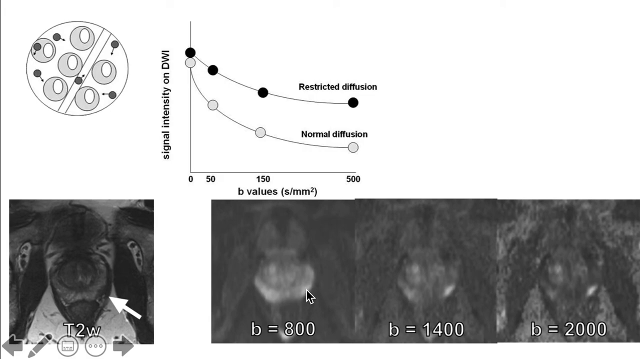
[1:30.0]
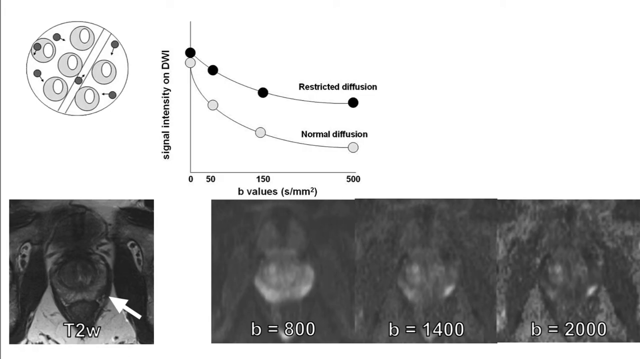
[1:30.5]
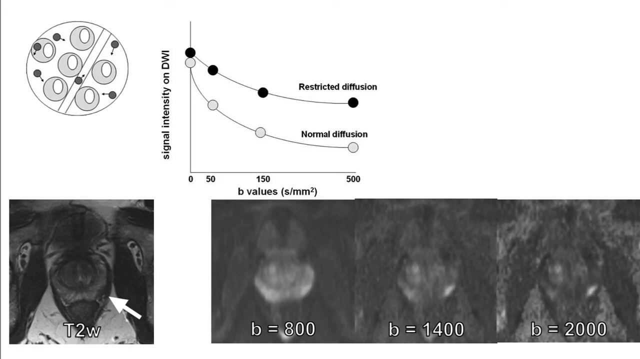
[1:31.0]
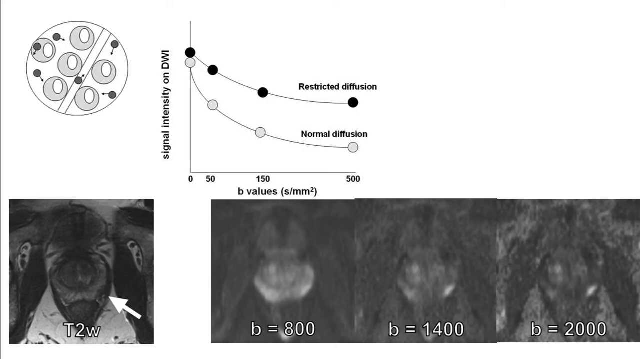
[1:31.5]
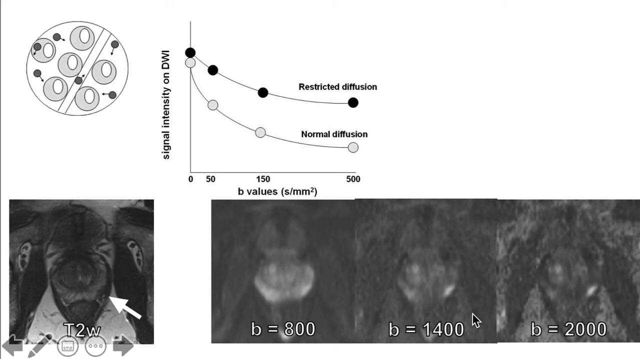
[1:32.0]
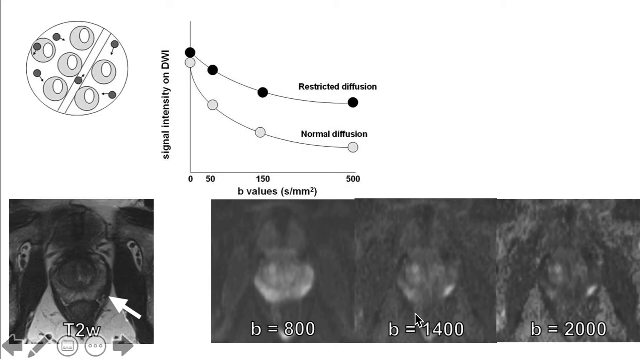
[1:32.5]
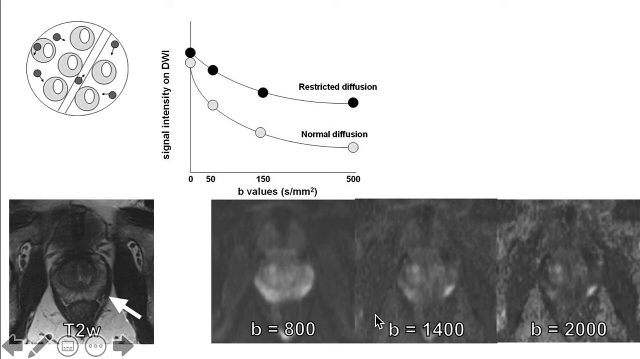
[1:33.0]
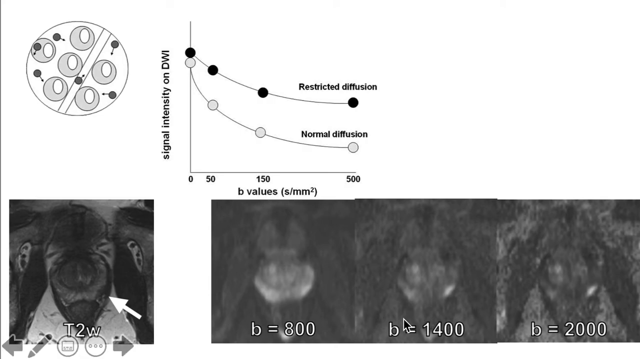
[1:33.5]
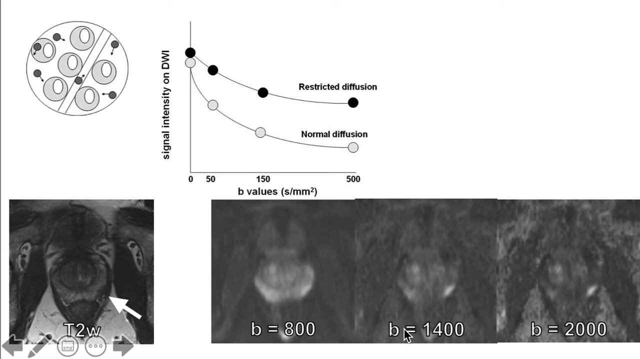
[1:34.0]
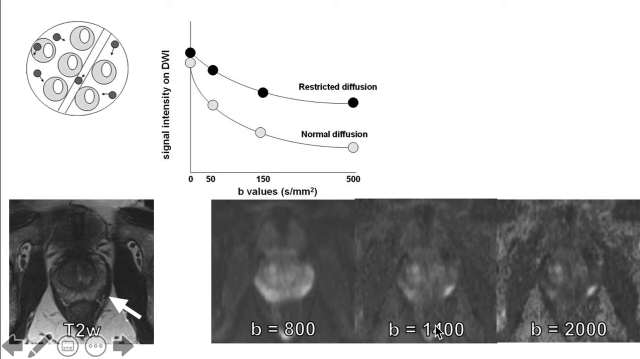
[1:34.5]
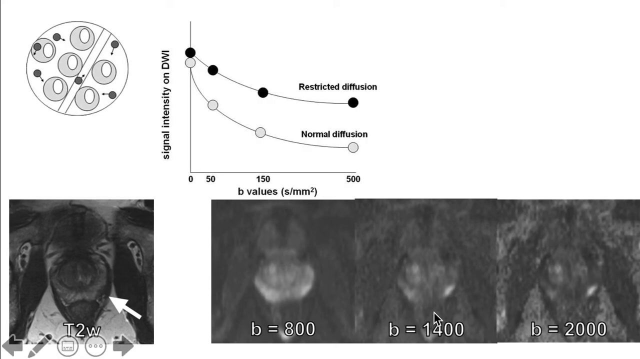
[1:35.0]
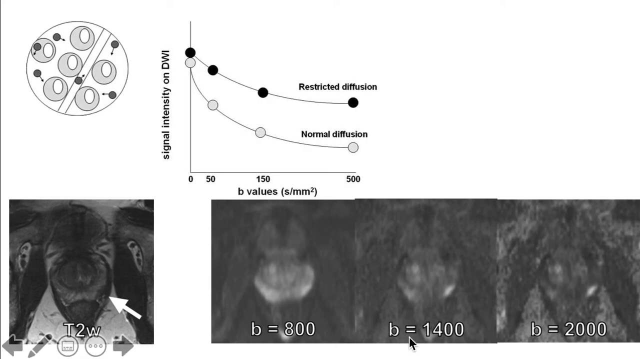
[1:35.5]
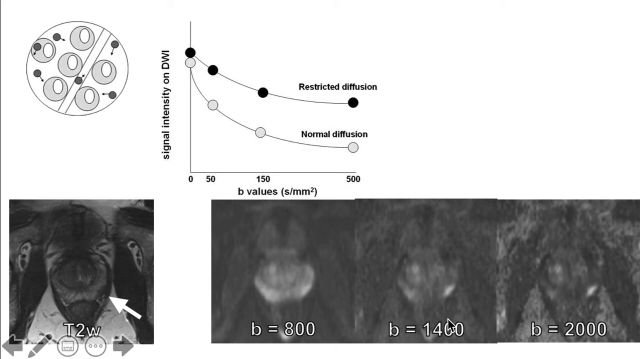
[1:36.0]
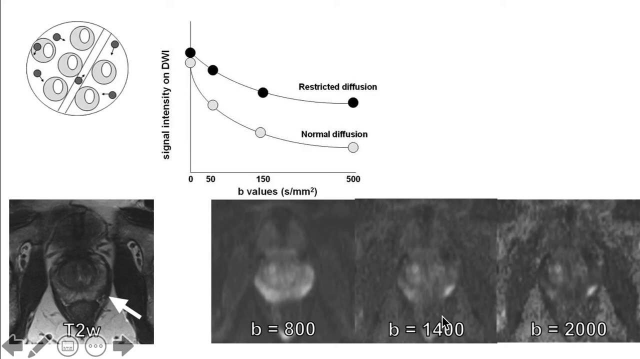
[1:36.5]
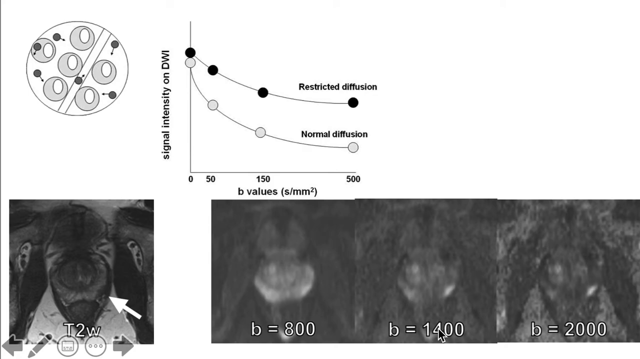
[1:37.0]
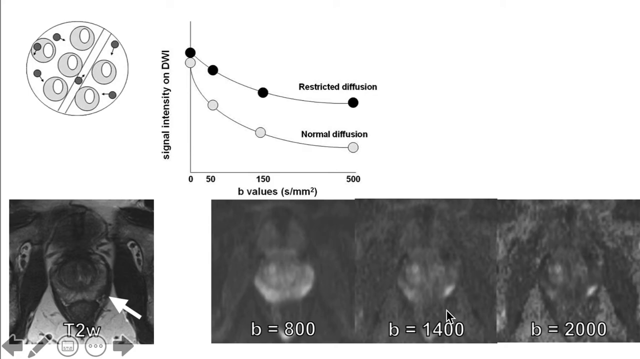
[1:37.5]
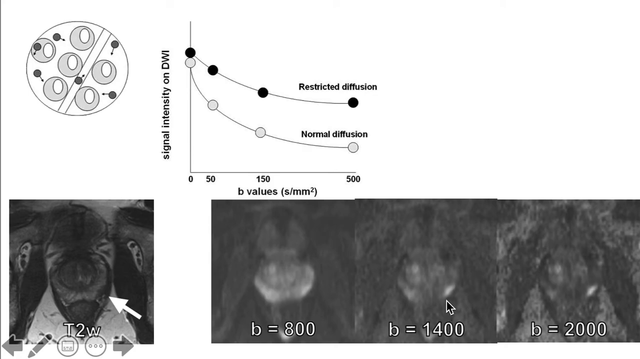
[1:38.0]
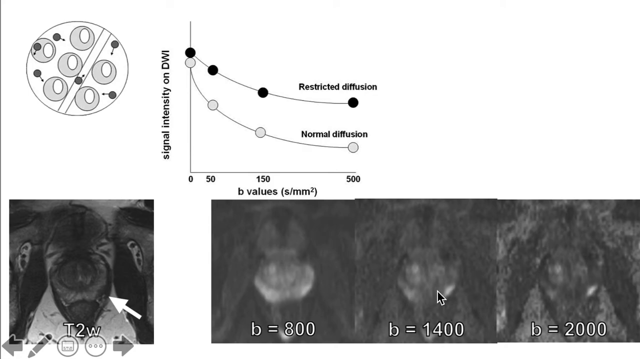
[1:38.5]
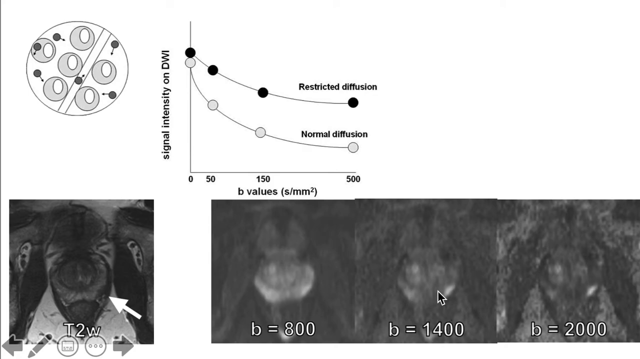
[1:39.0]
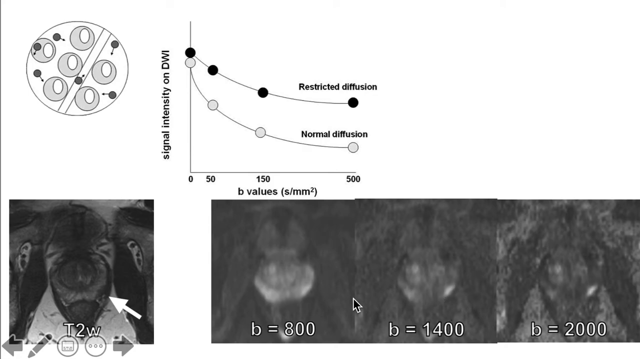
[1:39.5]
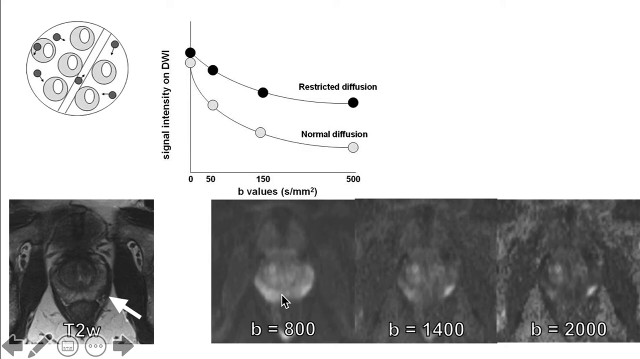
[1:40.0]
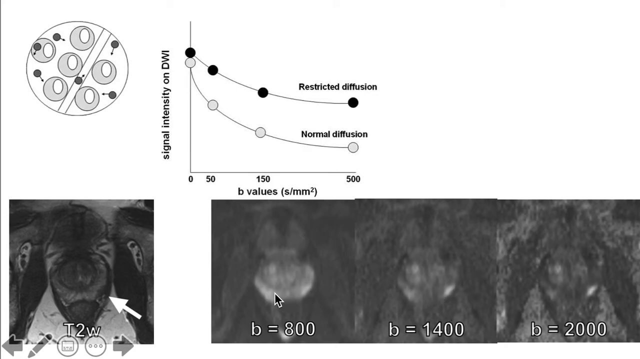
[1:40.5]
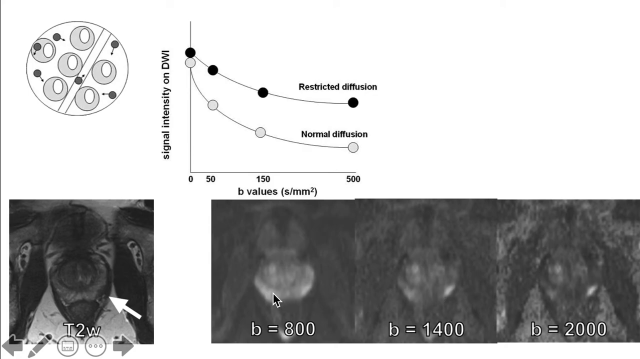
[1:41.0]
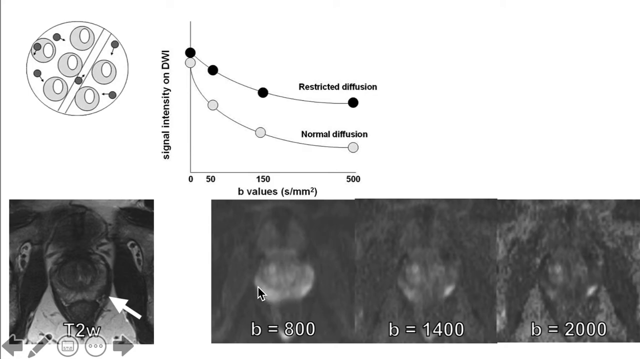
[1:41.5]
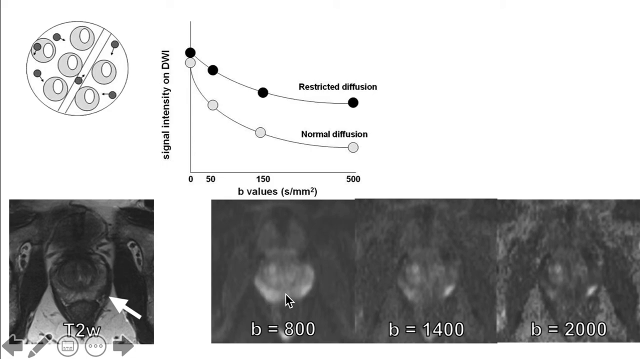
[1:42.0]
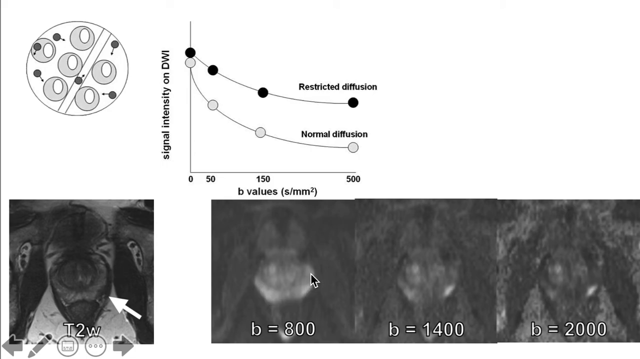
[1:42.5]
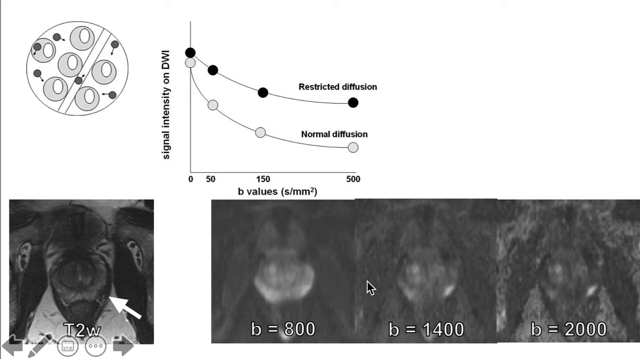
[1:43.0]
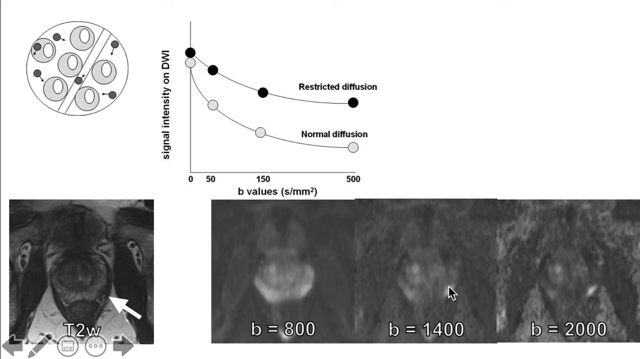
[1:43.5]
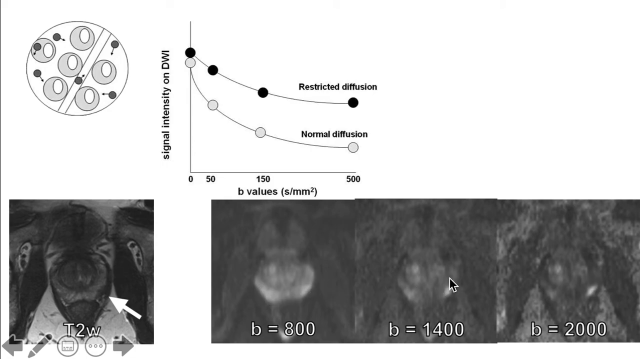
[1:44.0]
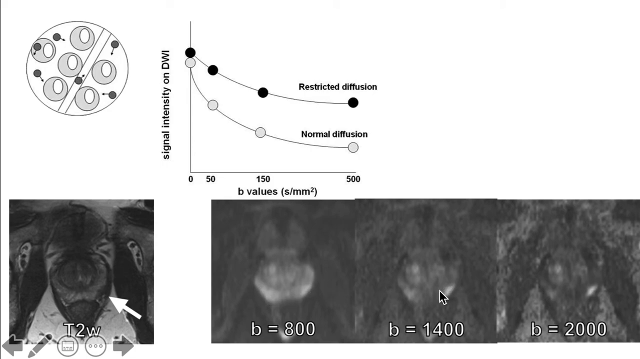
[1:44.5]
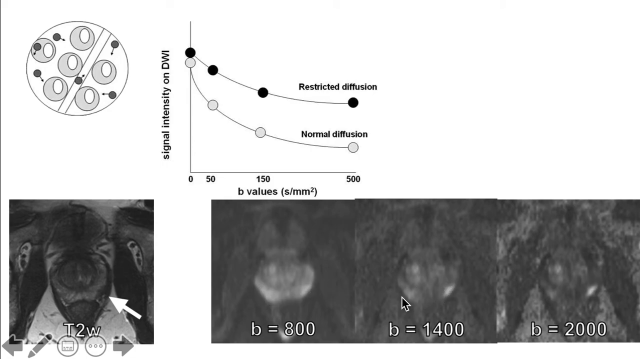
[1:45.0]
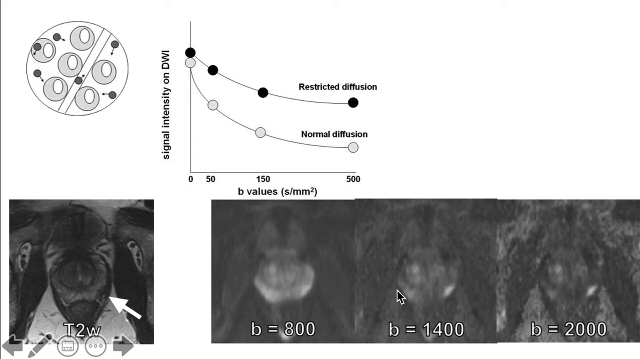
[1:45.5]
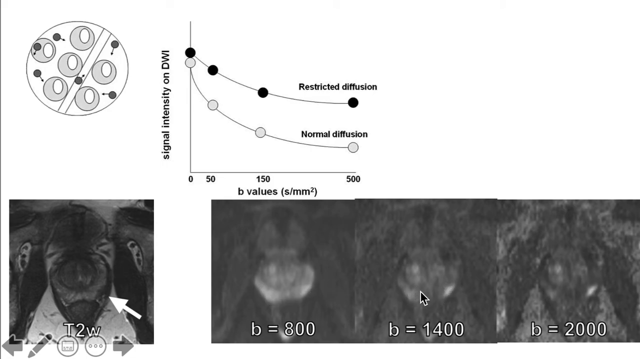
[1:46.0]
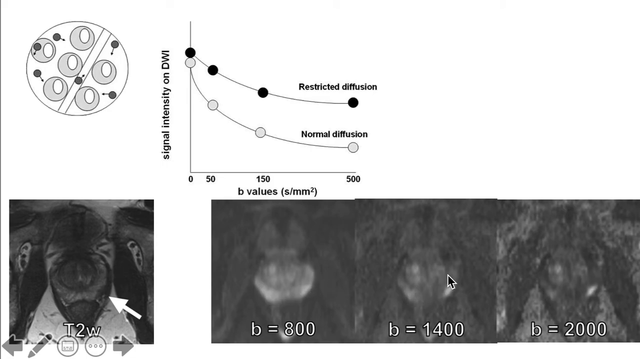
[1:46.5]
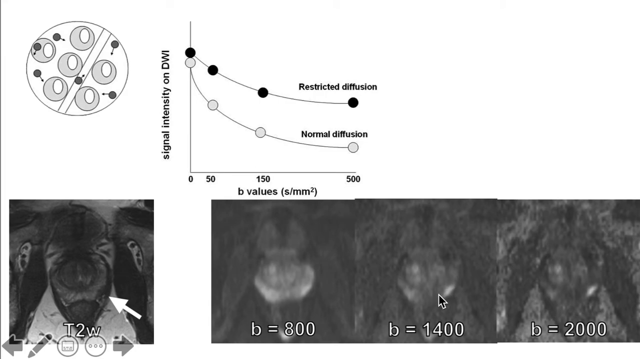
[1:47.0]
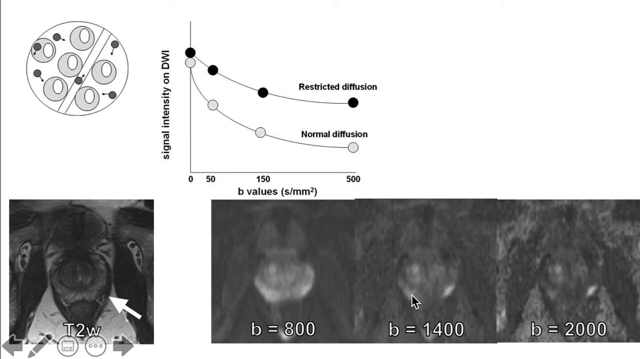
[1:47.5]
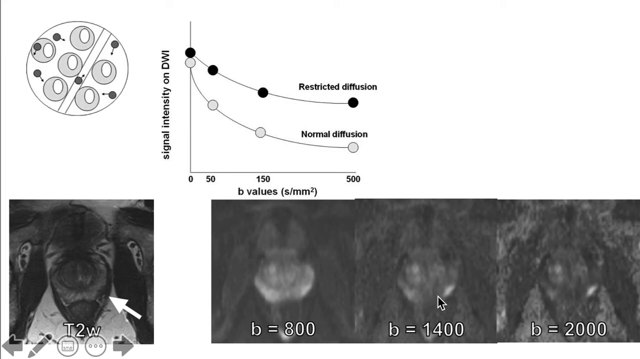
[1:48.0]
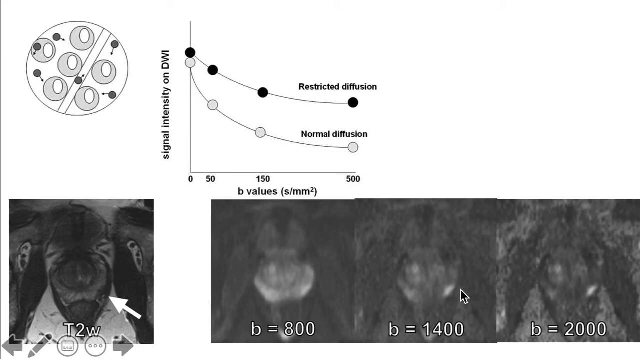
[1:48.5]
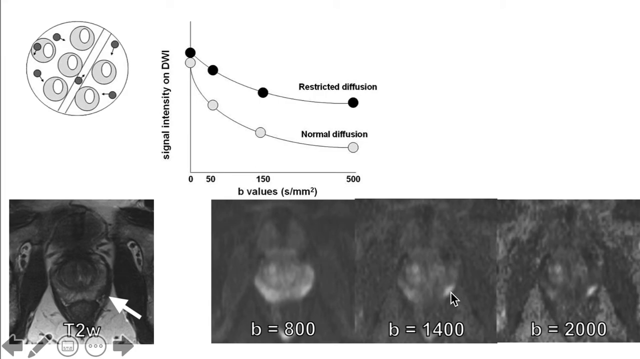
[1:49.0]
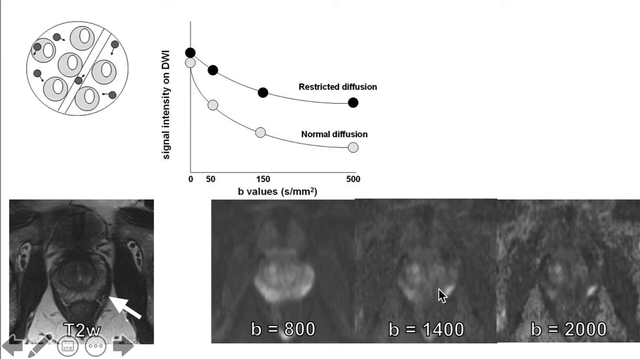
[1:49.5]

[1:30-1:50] Four images are along the bottom of the screen, labeled "T2W," "B equals 800," "B equals 1,400" and "B equals 2,000." The cursor gestures at the third image, making a circle around the label "B equals 1,400," moves left to the second image, and then moves back right to the third, tracing a curve. A small circle in the upper left-hand corner contains several smaller light gray circles with white hollow centers and six black dots placed sporadically. There is also a graph labeled "signal intensity on DWI" and "B values," with other labels including "restricted diffusion" and "normal diffusion."